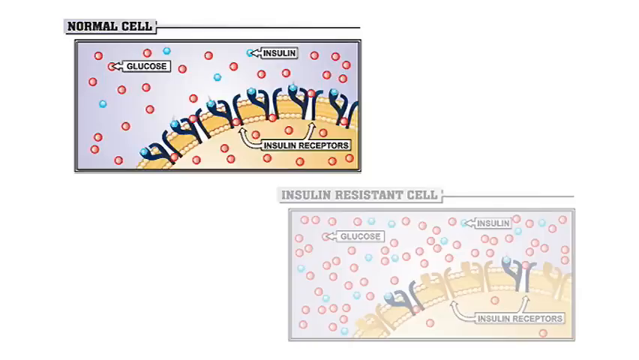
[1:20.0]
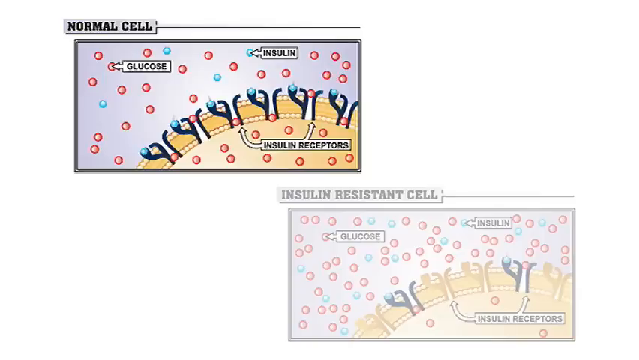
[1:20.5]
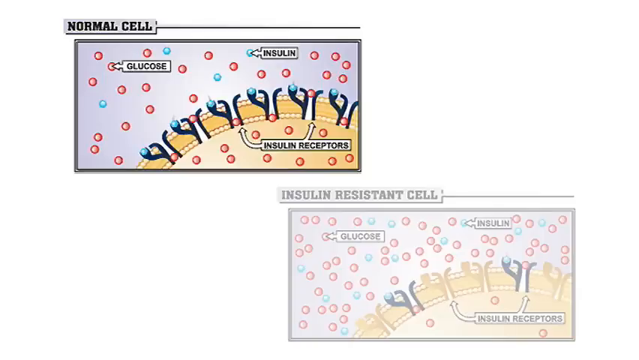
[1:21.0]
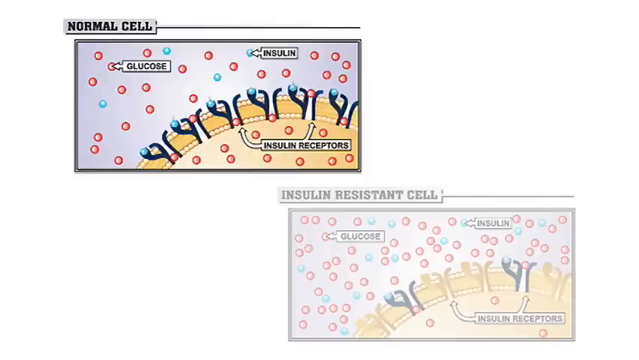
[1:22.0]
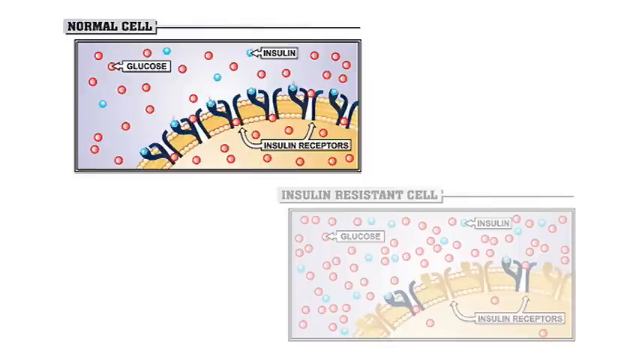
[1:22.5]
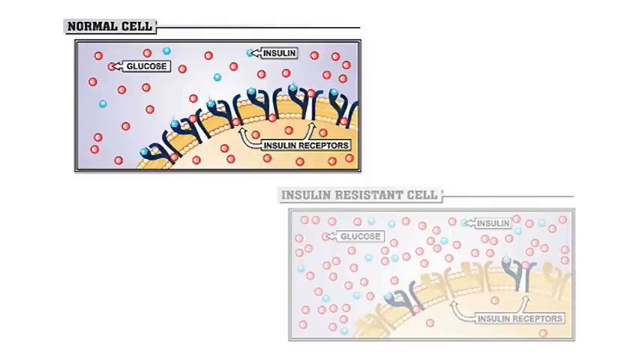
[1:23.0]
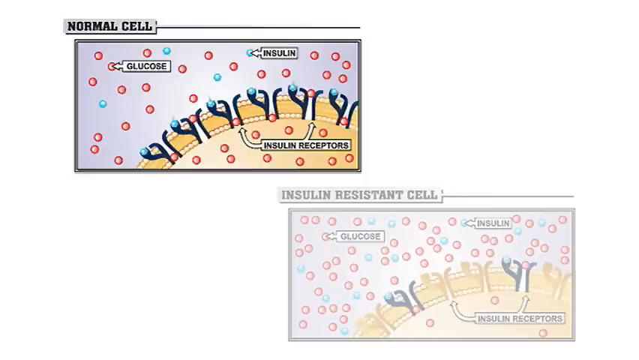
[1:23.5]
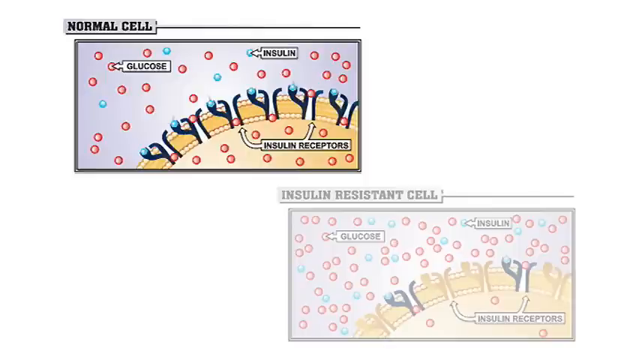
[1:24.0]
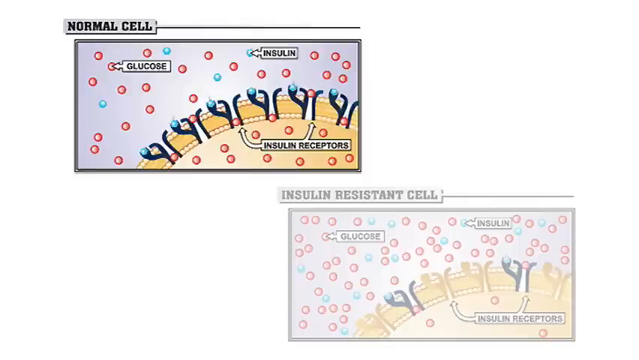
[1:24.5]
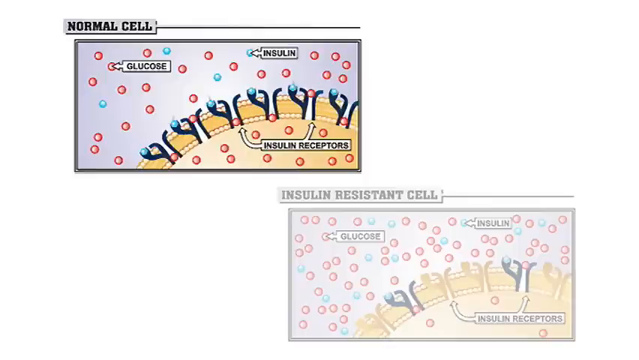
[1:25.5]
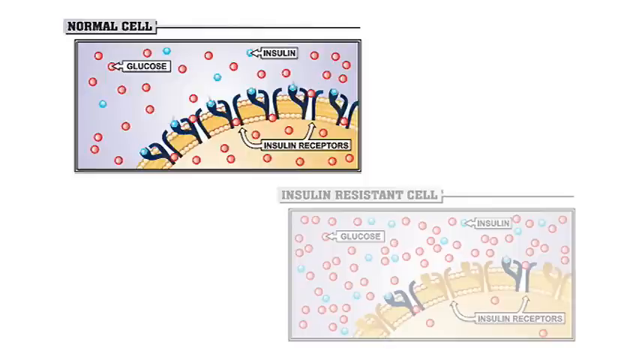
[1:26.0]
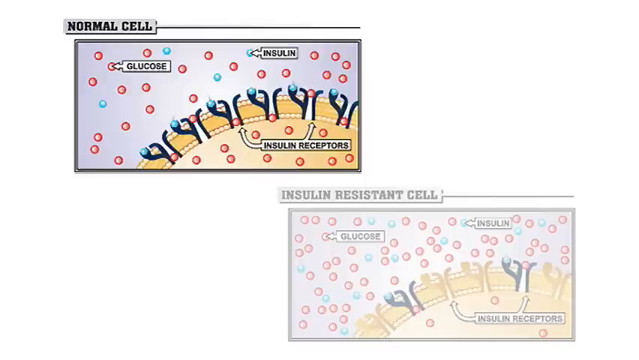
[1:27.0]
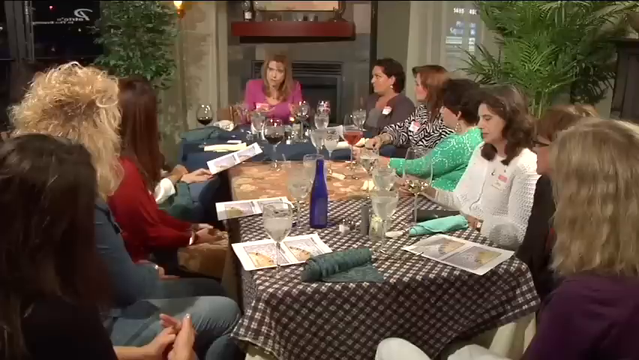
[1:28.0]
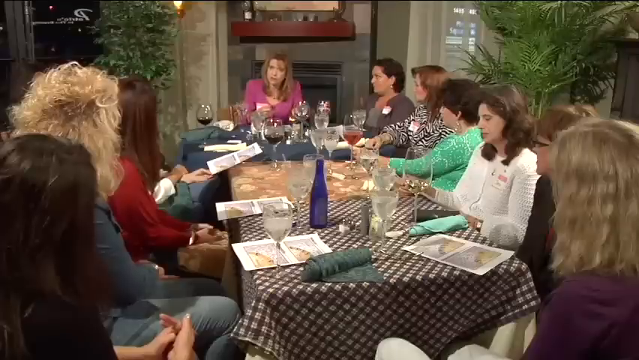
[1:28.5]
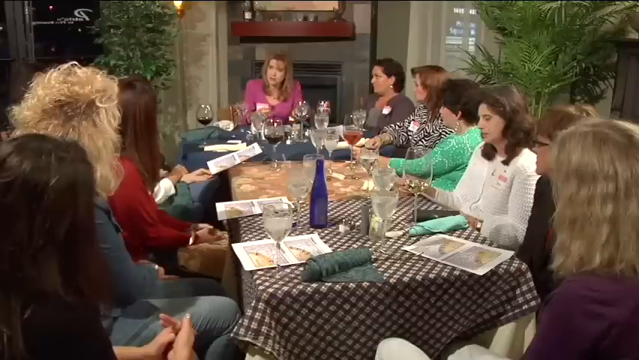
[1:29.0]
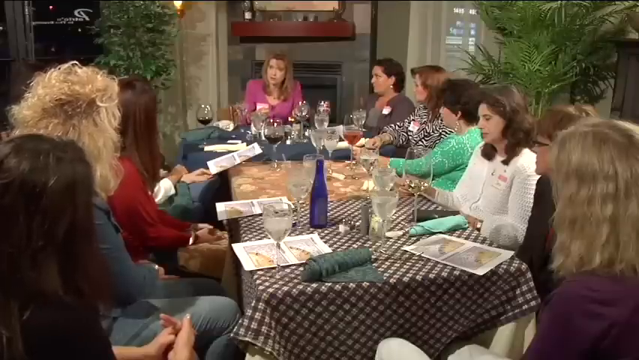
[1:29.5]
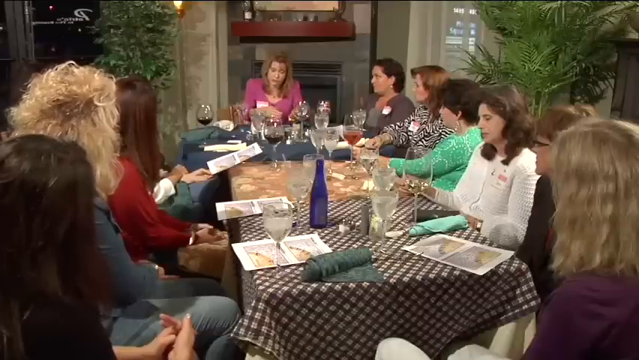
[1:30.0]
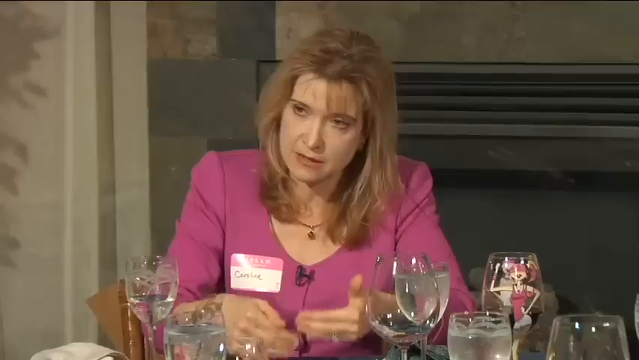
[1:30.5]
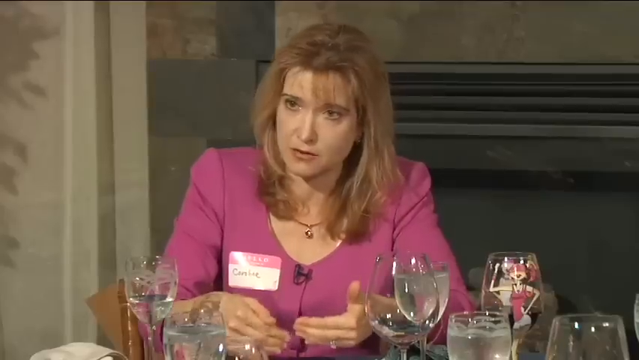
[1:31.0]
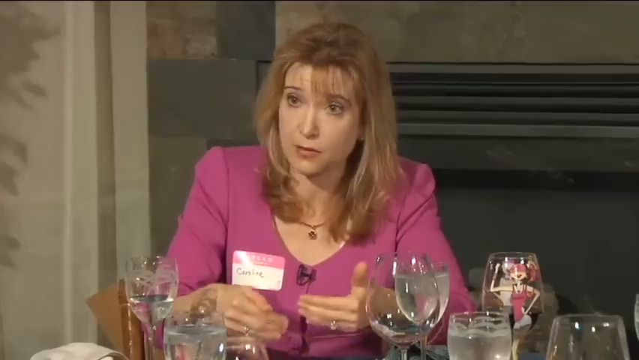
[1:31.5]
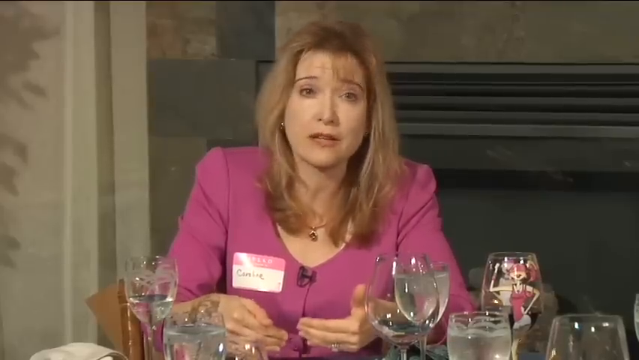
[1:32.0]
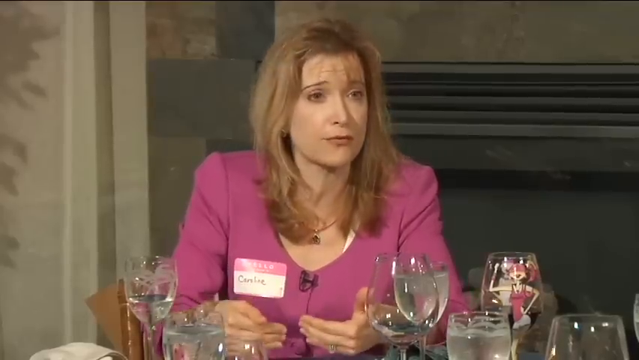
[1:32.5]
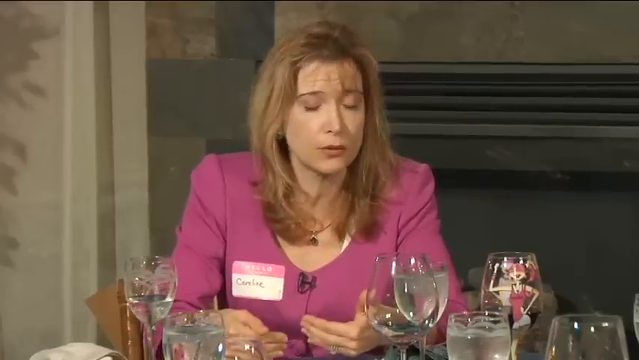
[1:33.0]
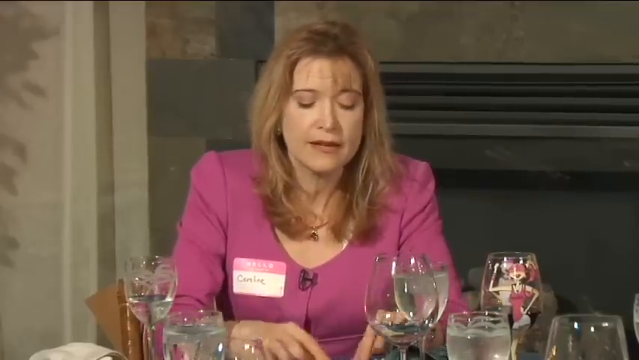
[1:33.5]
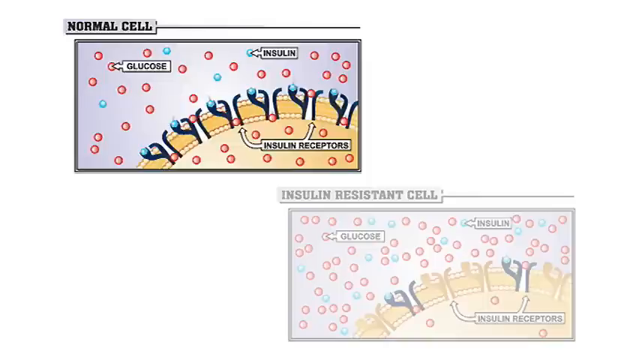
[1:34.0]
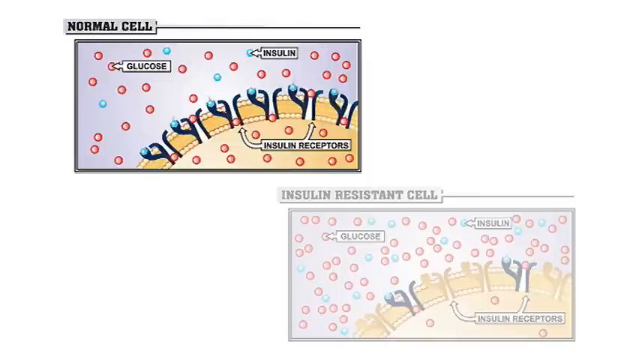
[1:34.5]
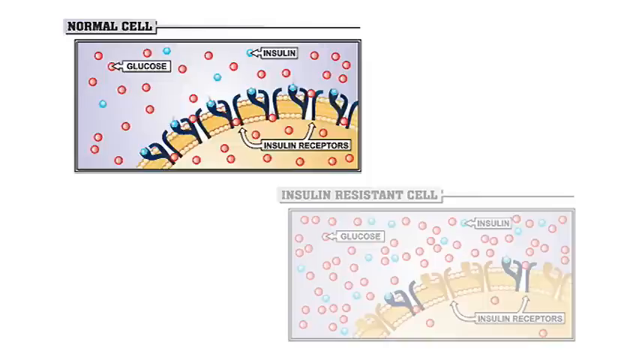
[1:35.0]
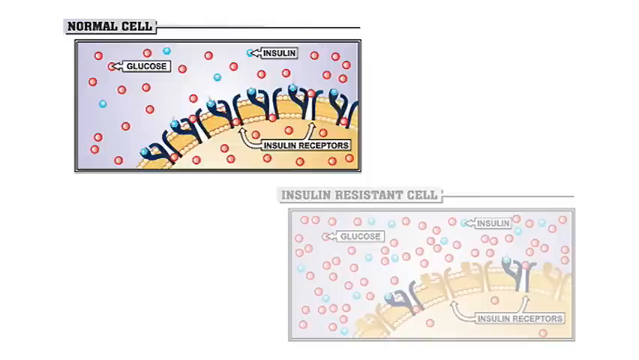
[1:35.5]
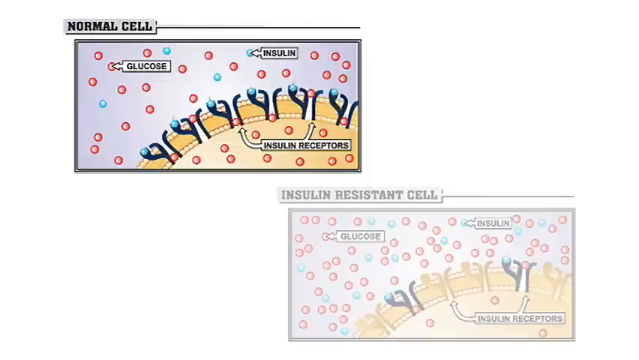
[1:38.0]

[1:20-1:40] Two banners appear on the screen, one in the upper left and one in the lower right, each with a different title. The upper left banner is titled "normal cell" and the lower right banner is titled as an insulin-resistant cell. Inside each banner, little arrows point to red and blue dots: the red dots are glucose cells and the blue ones insulin, with the insulin receptors below them as part of the blood cell. The two banners are the same except for their titles. The video then transitions to a woman sitting at a table talking to people in front of her. She wears a dark pink top with a name tag sticker on the front of her shirt and kind of slightly moves her hands up and down in unison as she speaks.